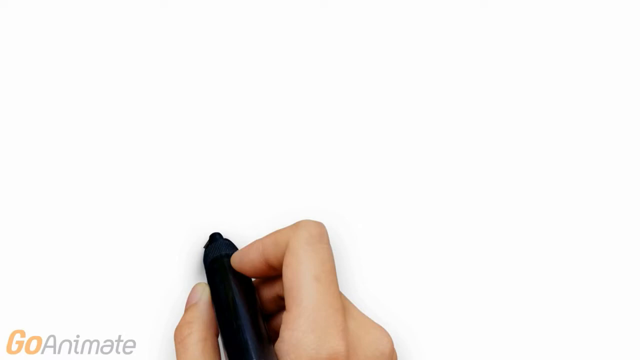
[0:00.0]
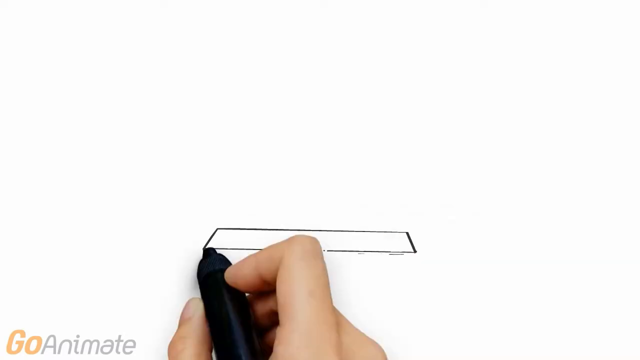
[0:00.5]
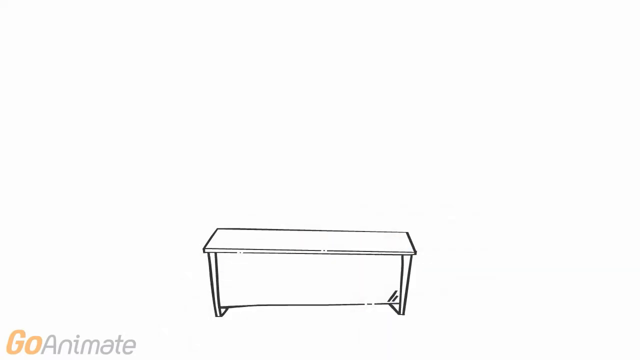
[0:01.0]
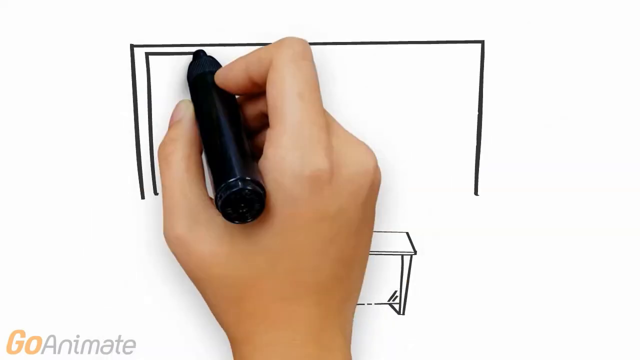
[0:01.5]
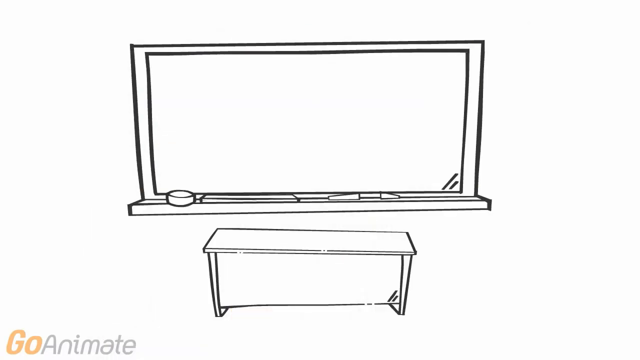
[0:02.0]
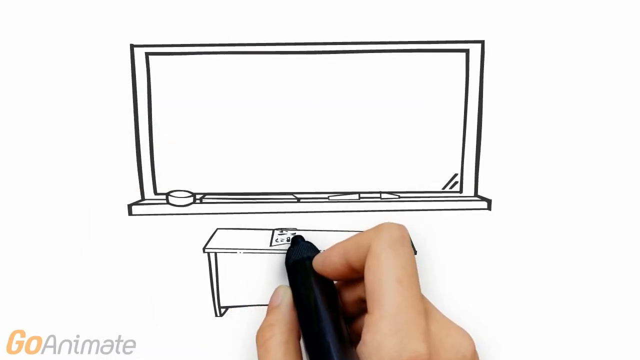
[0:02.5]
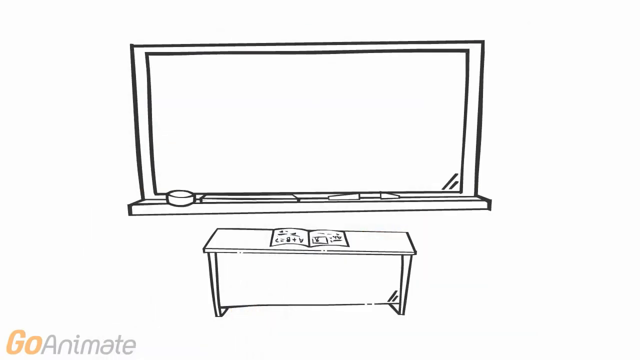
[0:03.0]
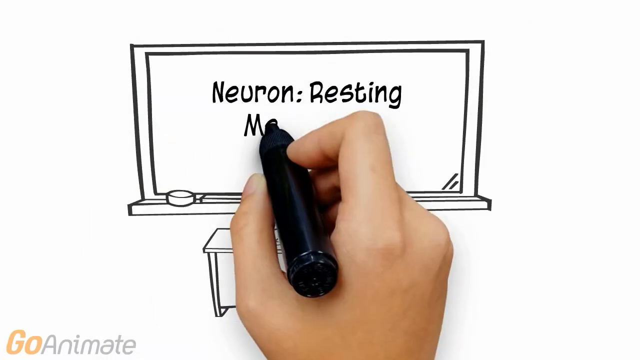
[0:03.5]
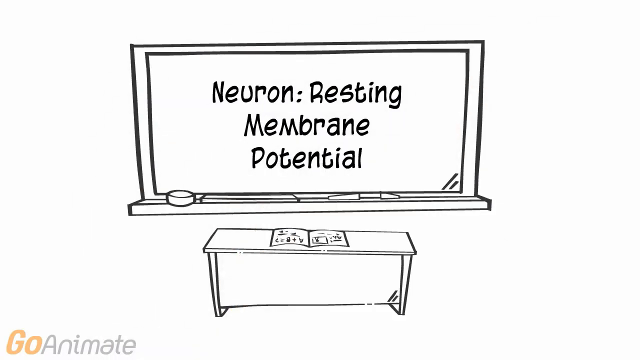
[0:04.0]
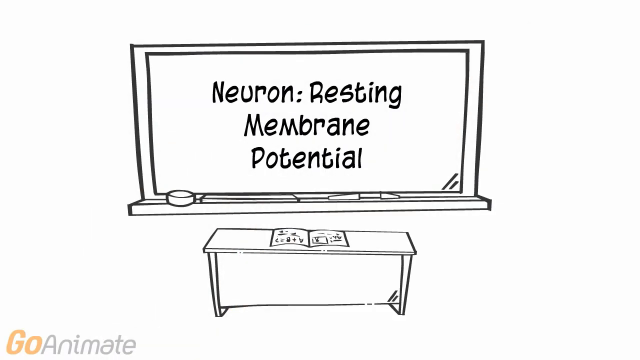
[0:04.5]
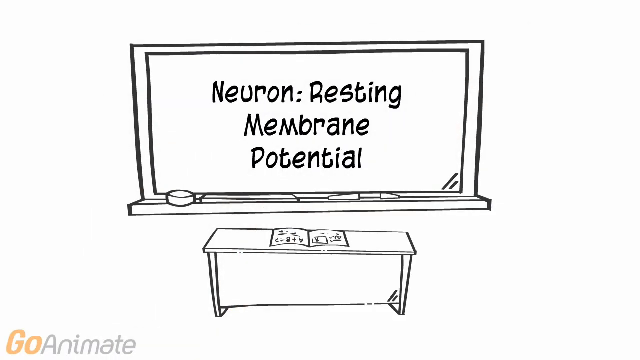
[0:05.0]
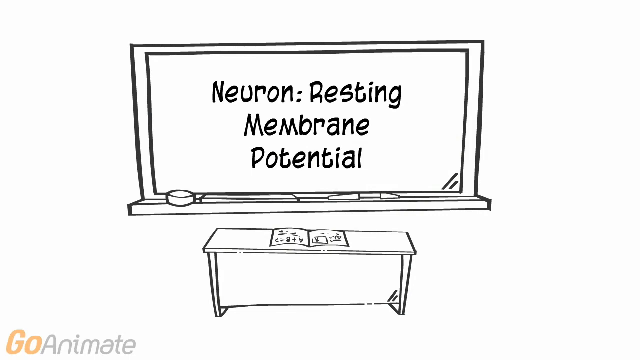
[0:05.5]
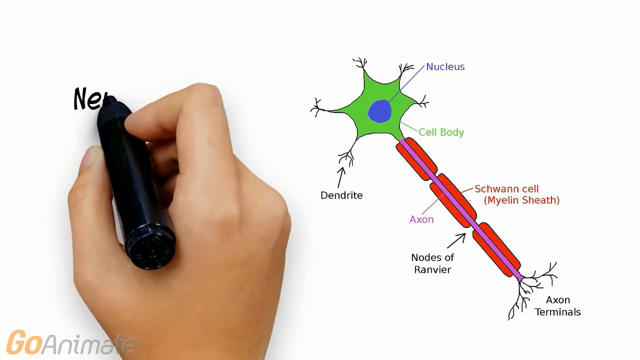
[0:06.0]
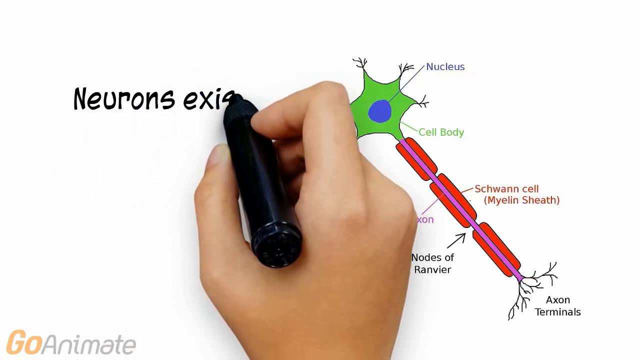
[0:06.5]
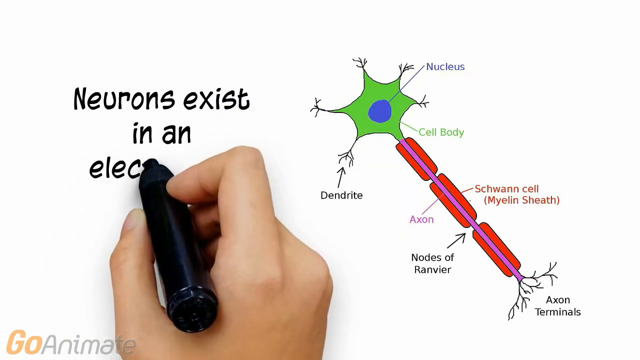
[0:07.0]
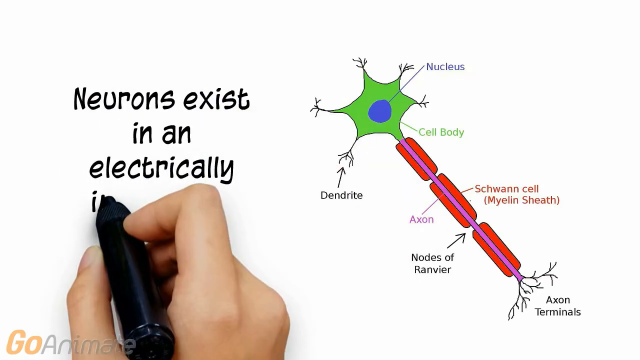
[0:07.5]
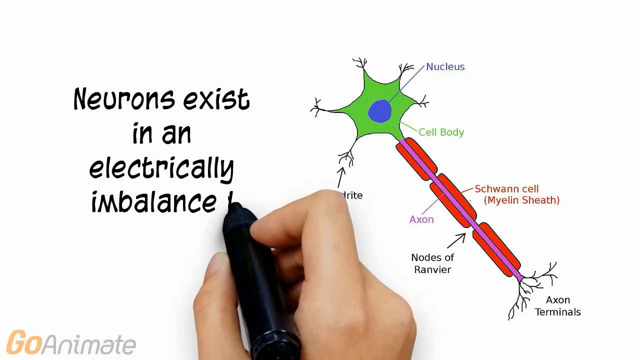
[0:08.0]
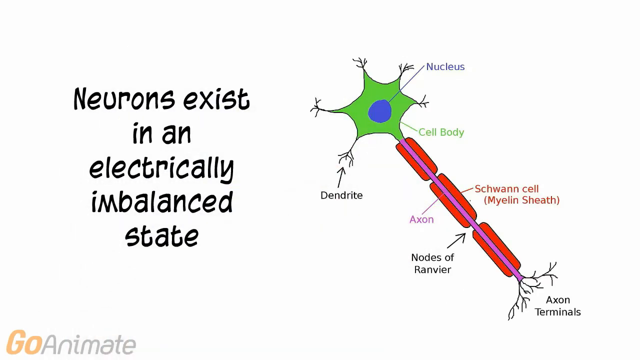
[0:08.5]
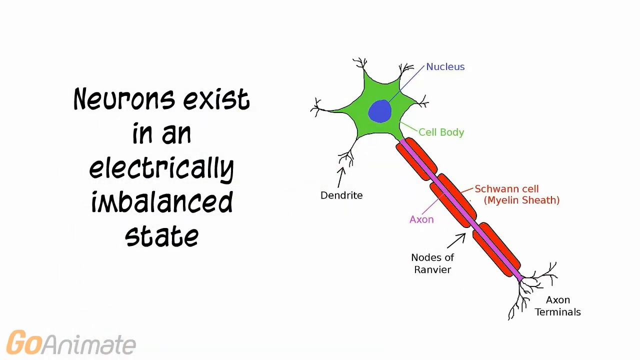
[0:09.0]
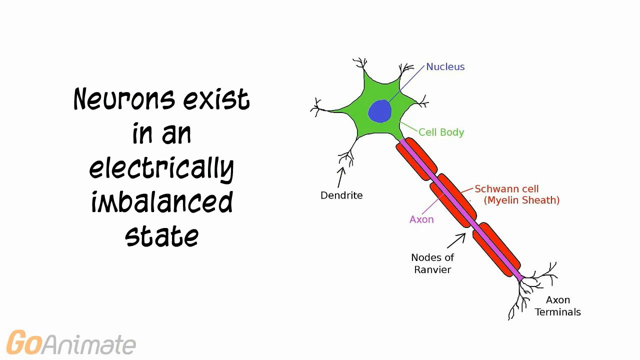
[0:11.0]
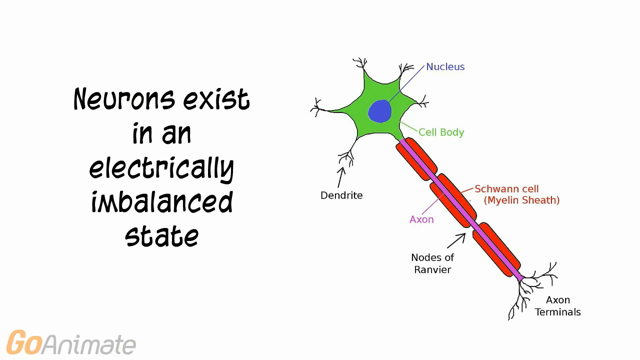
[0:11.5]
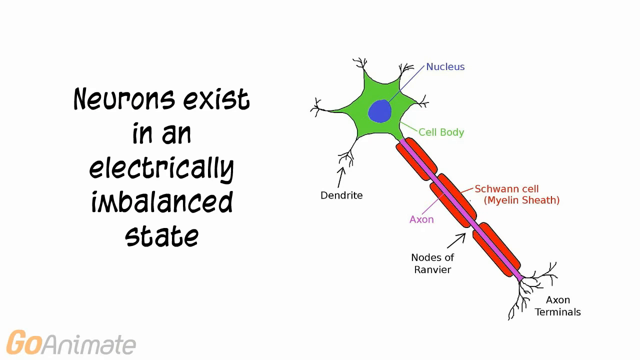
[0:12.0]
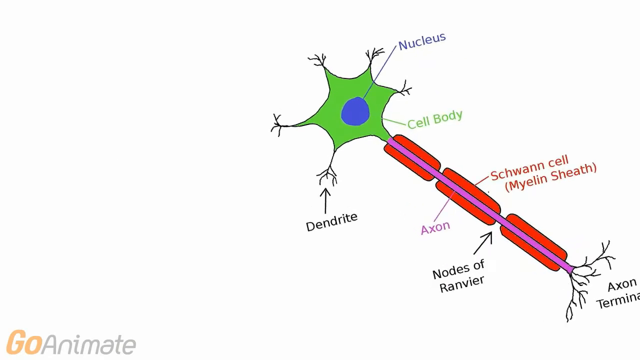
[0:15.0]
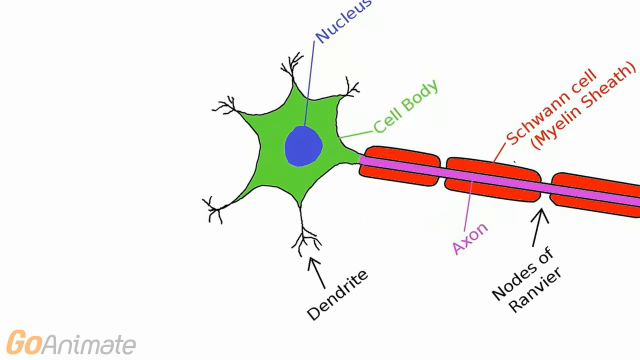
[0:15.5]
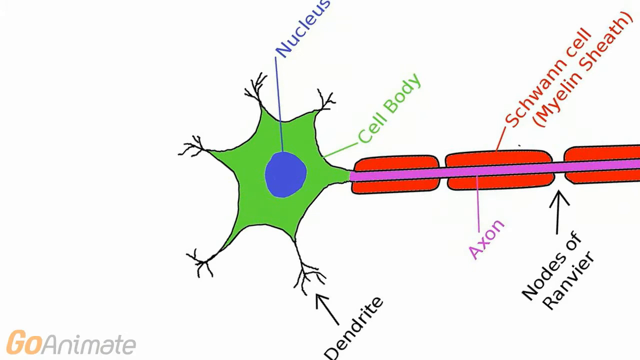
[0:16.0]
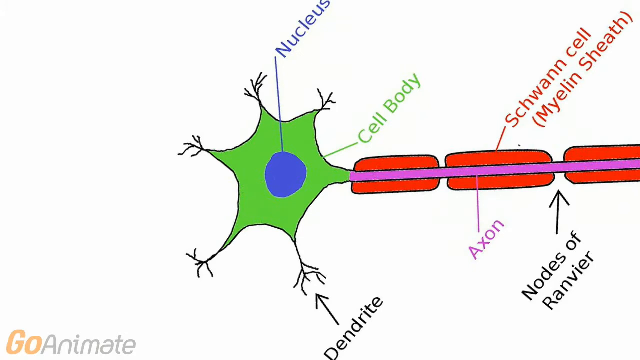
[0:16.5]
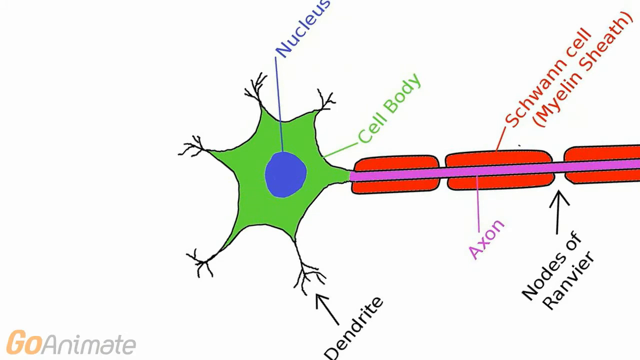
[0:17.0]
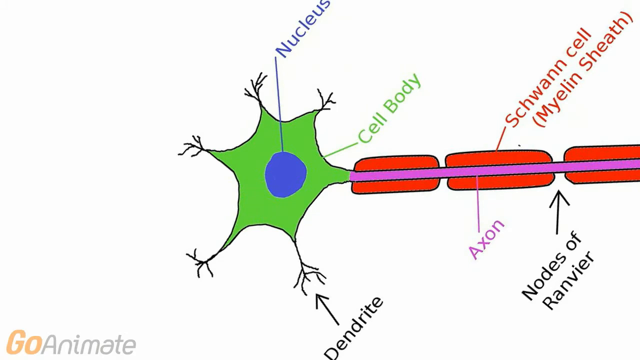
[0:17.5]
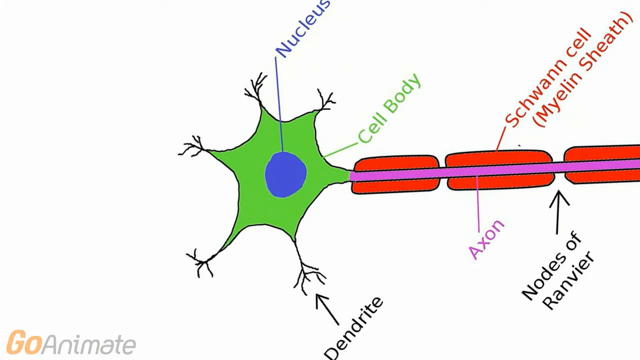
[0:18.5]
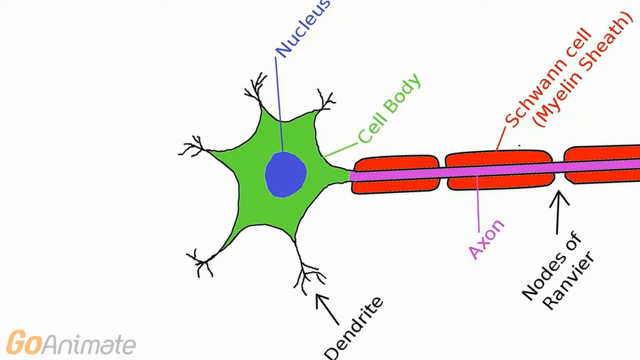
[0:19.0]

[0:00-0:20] Someone's right hand holds a black marker and draws very quickly on a white screen, making an outline drawing of a desk with a blackboard behind it. A book rests on the desk, and on the blackboard are the words "Neuron Resting Membrane Potential." The image changes, and the same handwriting appears in black on the left-hand side of the screen: "Neurons exist in an electrically imbalanced state." On the right-hand side is a drawing of a neuron, oriented diagonally across the screen with the top pointing to the upper left and the bottom at the bottom right. At the top is a star-shaped green area labeled "cell body," with a blue circle inside it labeled "nucleus." The lines at its ends are labeled "dendrites." Below are three red segments with a purple center running through them all; the purple center is labeled "axon," the red is labeled "Schwann cell myelin sheath," and the spaces between the three segments are labeled "nodes of Ranvier." At the bottom is the label "axon terminals." The drawing then shifts counterclockwise and moves closer to the camera.